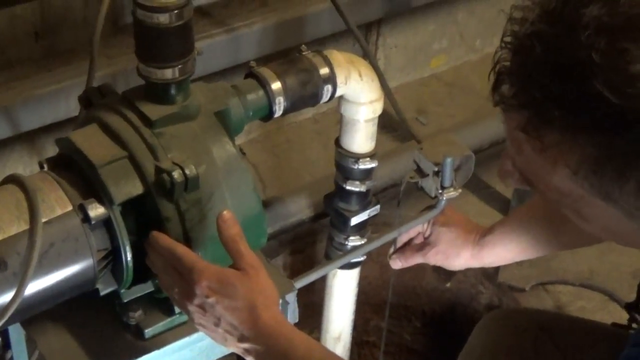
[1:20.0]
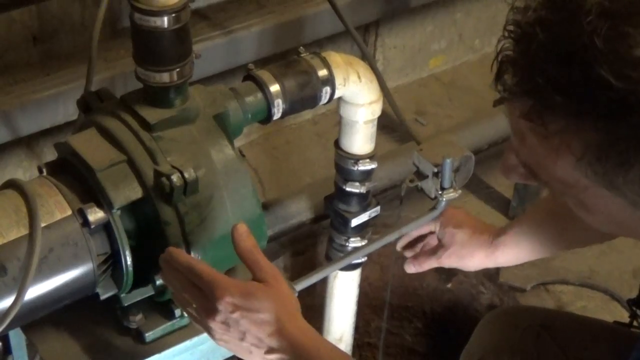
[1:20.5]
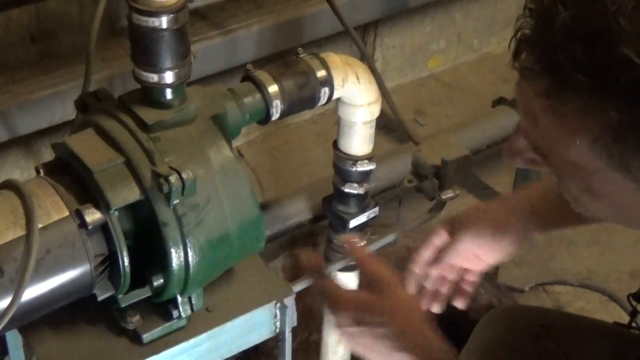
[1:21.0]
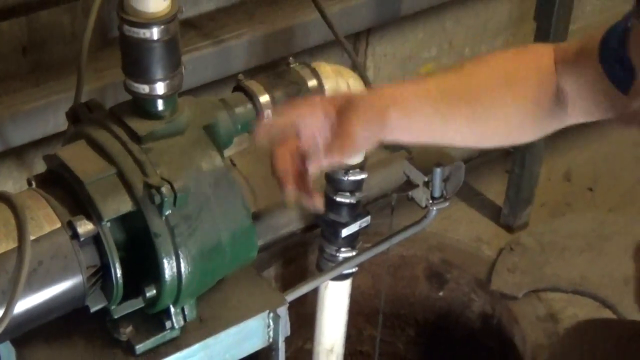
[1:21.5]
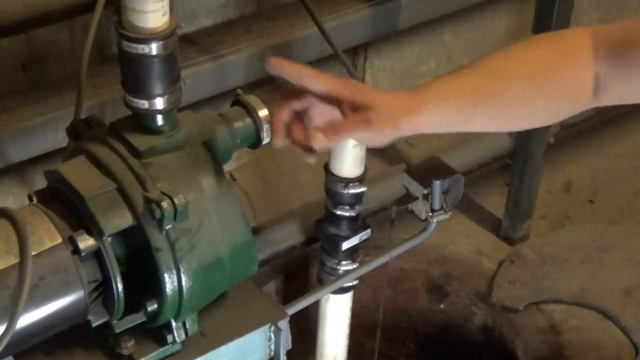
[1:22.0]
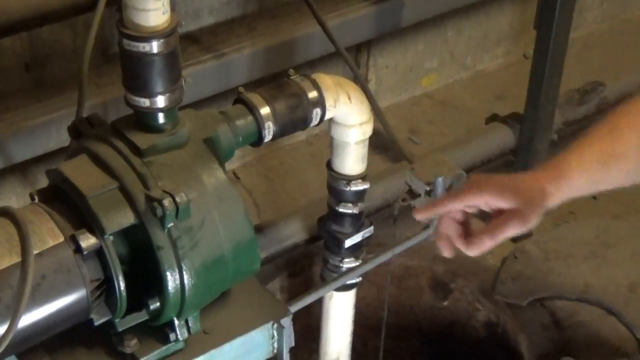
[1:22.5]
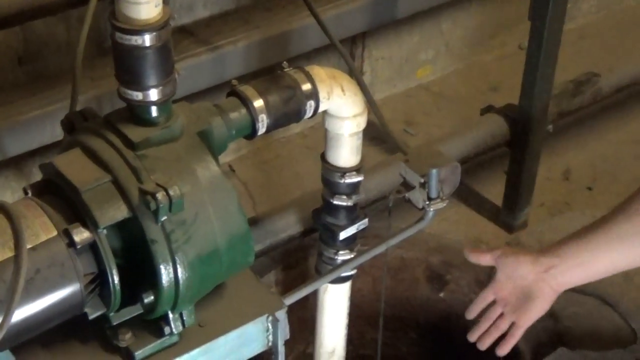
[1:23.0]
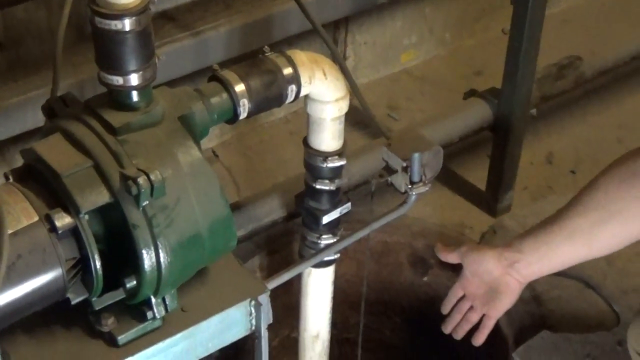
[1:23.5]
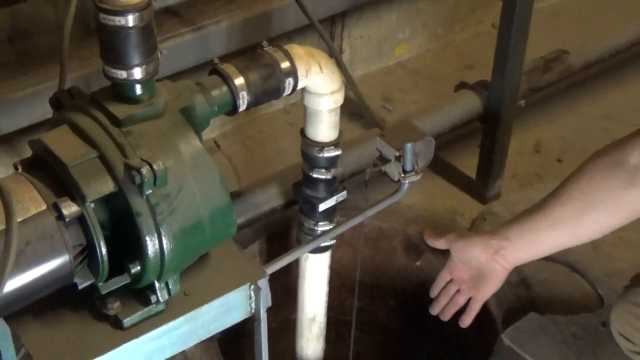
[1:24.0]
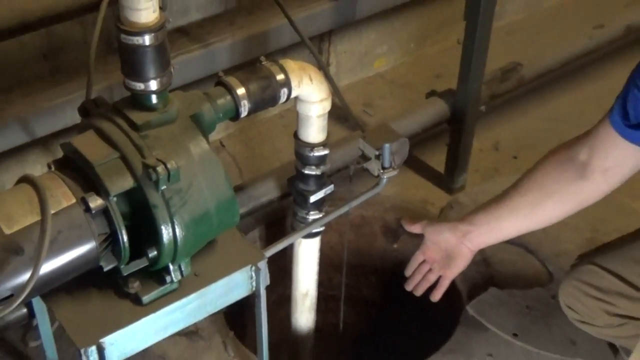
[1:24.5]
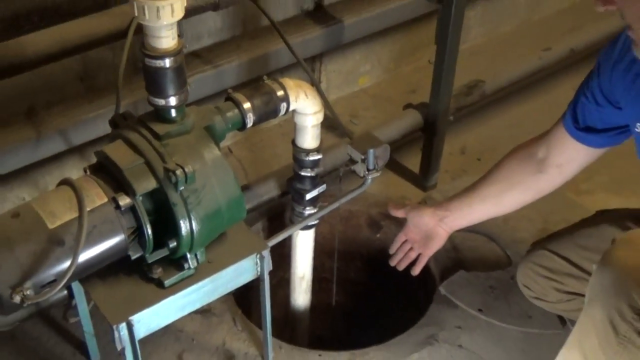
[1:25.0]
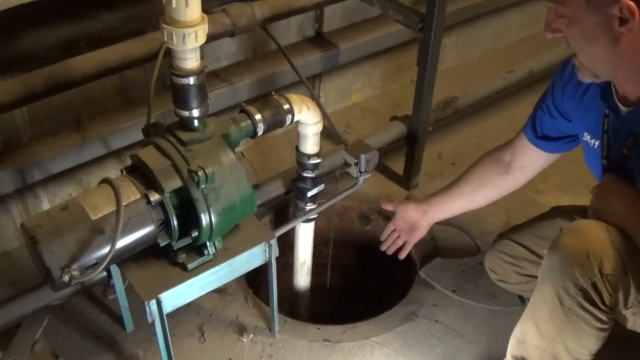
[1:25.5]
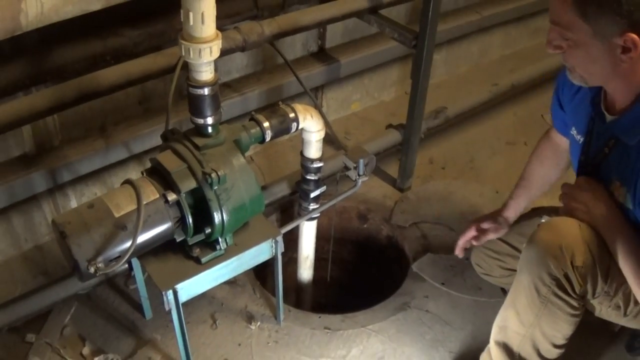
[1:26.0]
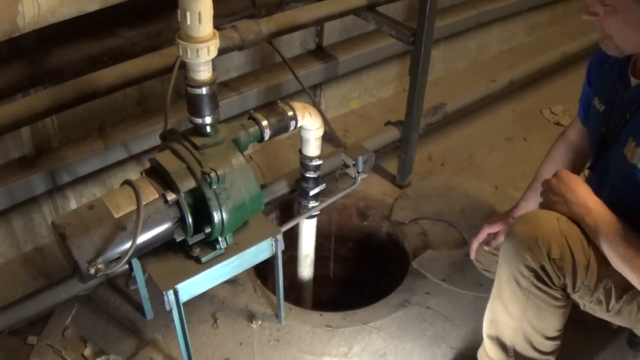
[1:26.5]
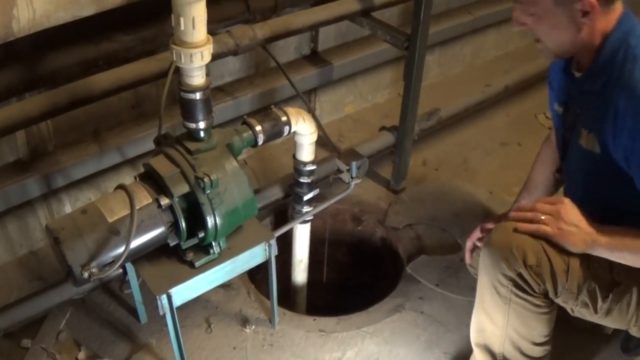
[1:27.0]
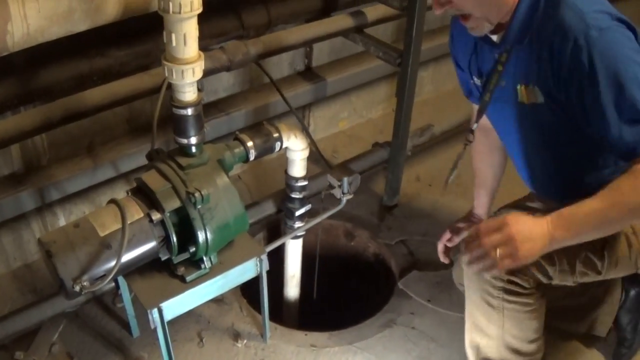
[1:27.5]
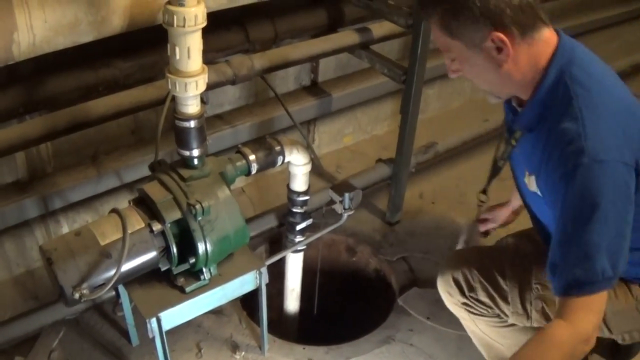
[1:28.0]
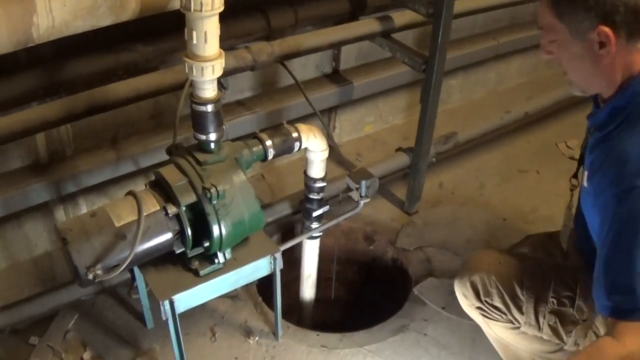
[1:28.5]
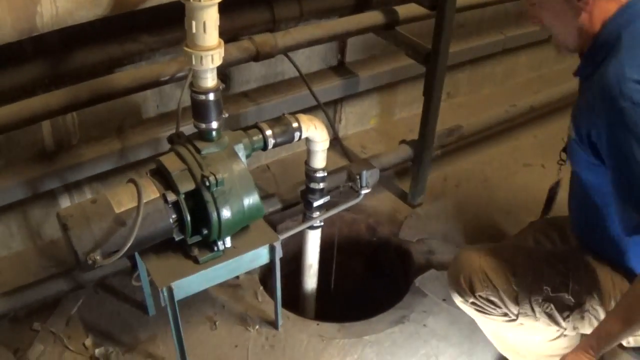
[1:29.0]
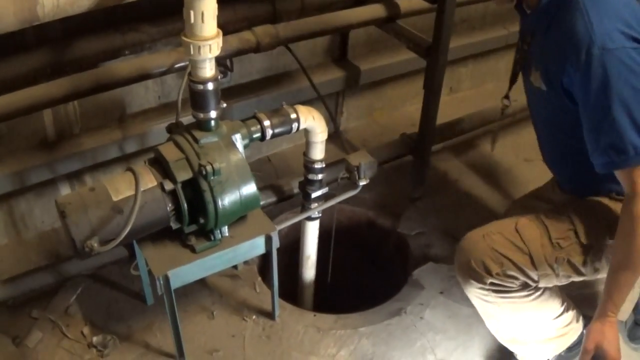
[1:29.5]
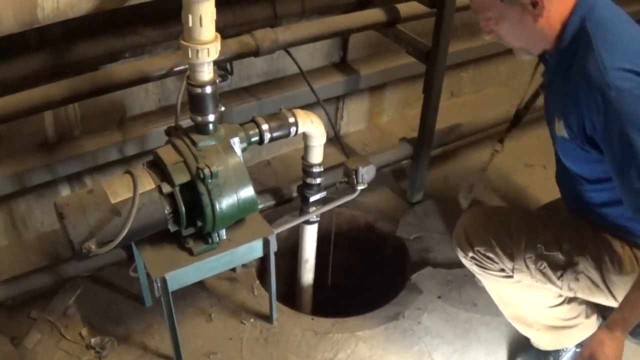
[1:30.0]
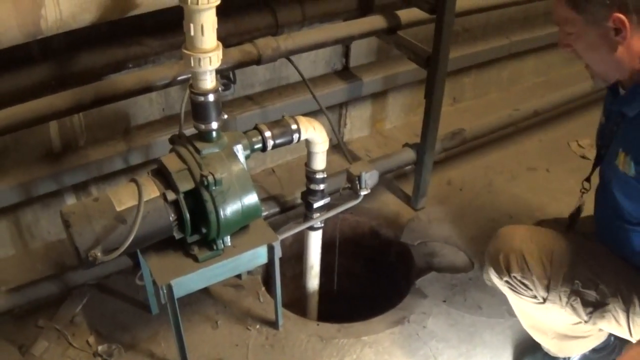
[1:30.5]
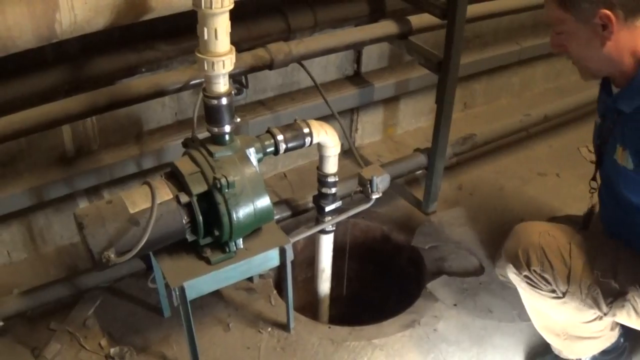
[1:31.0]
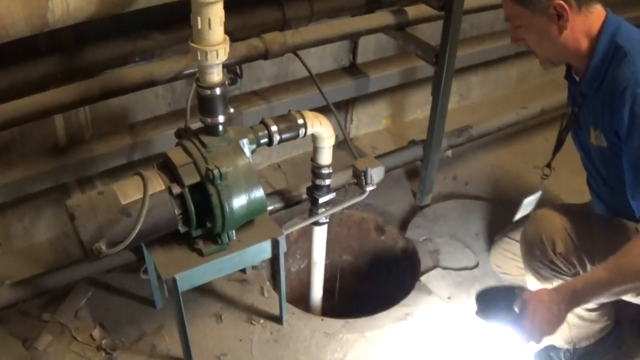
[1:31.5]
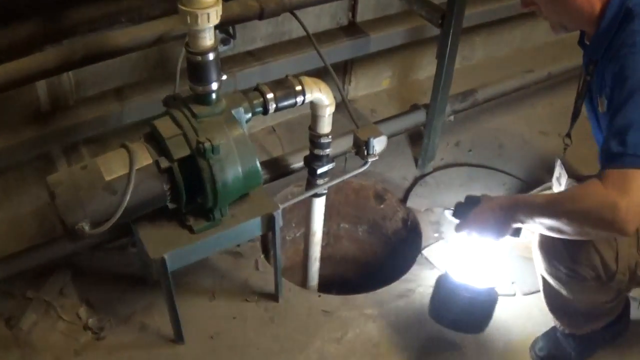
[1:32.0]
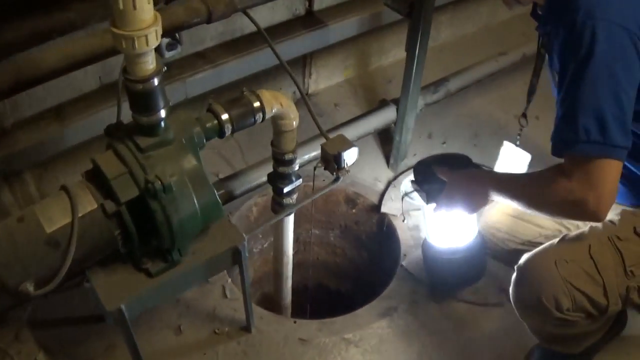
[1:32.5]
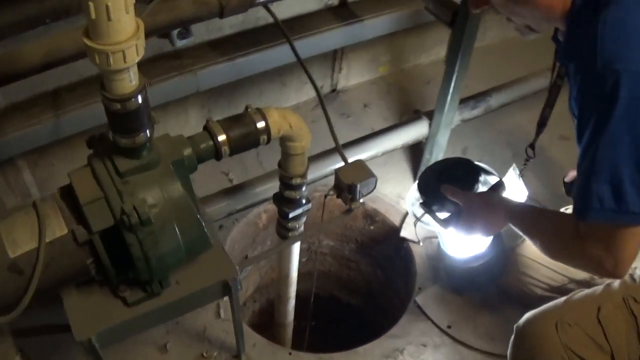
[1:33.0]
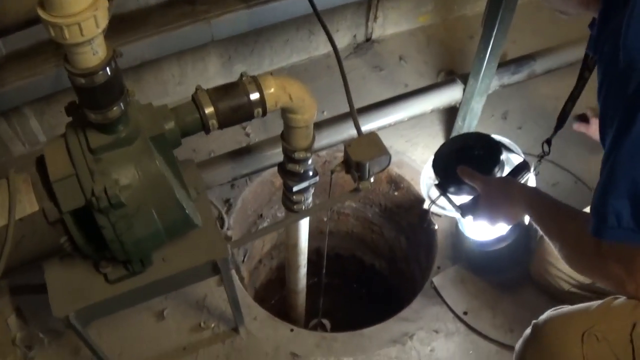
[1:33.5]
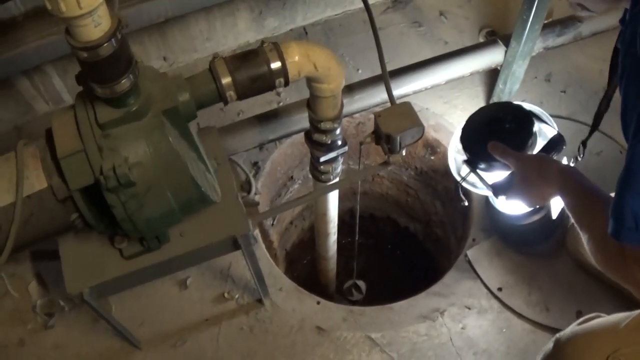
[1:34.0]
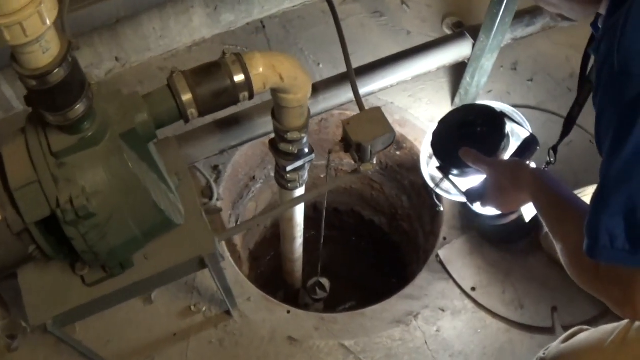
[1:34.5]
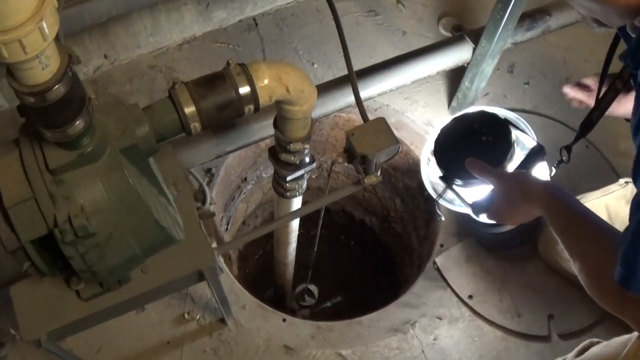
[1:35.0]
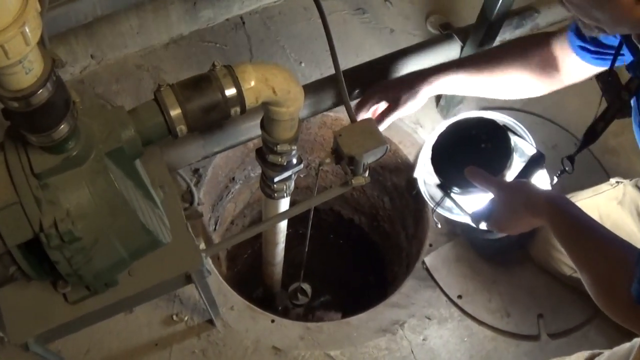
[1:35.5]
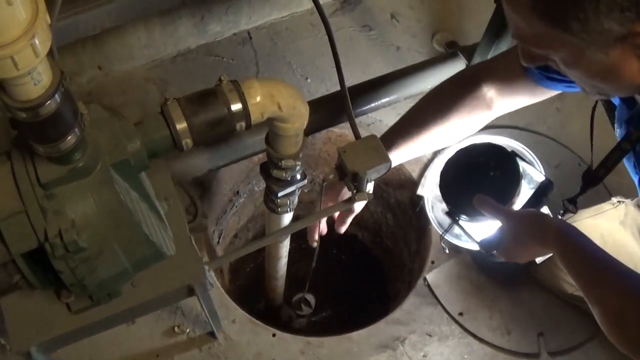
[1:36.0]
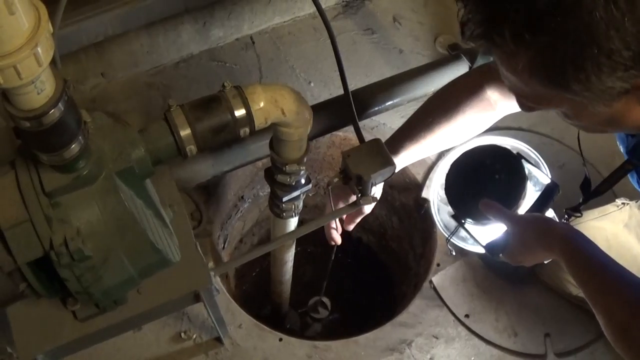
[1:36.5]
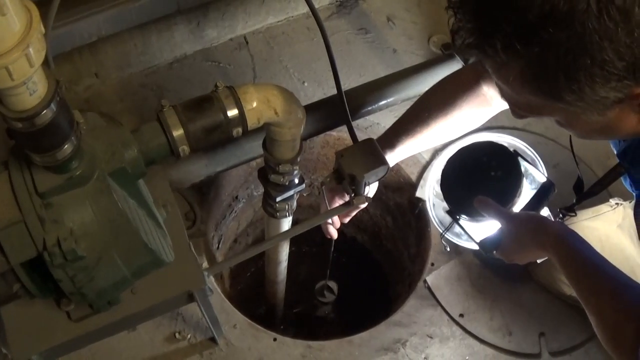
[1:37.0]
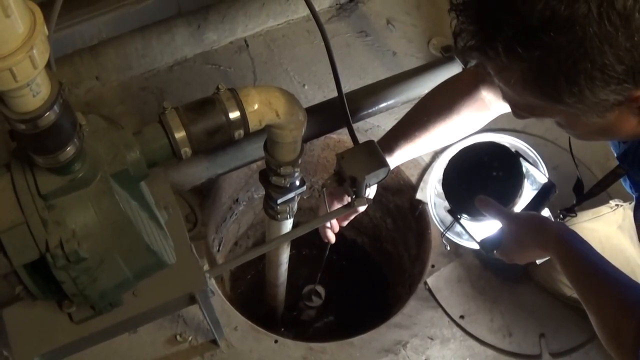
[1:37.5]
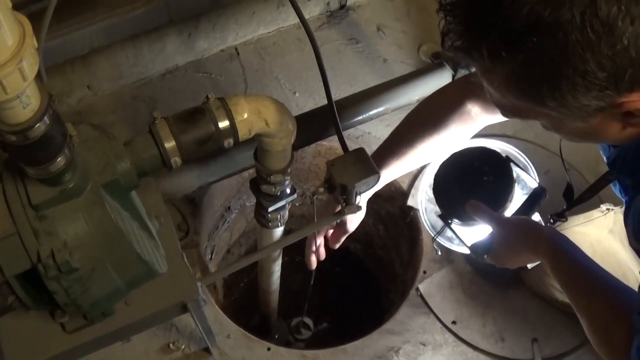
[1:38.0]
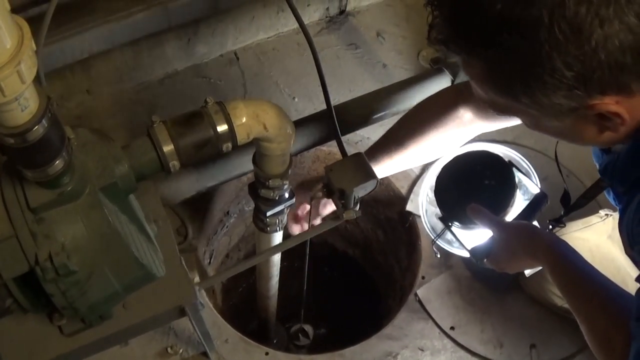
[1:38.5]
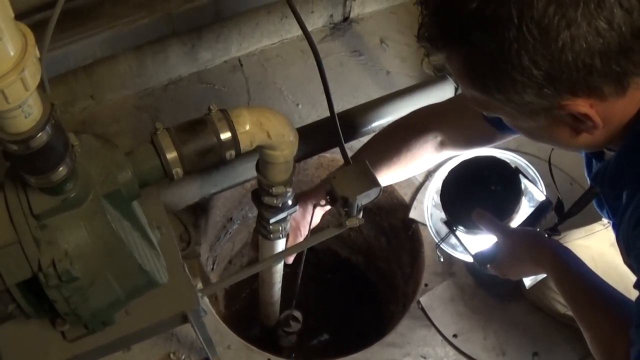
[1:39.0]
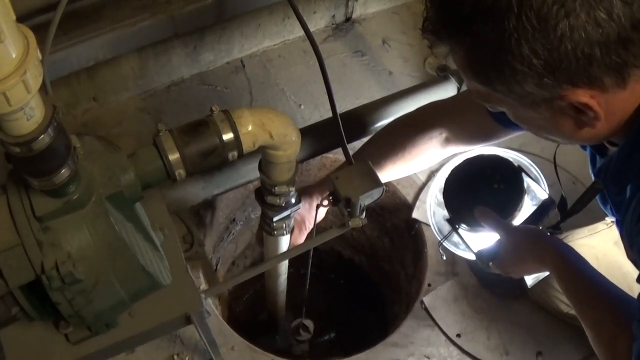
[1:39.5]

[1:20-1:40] The man is still in the blue t-shirt. The video zooms in as light shines on the pump and on the pipe coming from the underground hole. The man touches a thin string, then rotates his finger anticlockwise near the pump's motor. He points down with his entire hand at the cylindrical hole, with one knee on the ground. He takes the lamp near the hole, revealing the hole and showing that the string he touched is like a plumb bob. He then moves the white pipe coming out of the hole. Far down, the hole appears to contain liquid or water, visible from the reflections.